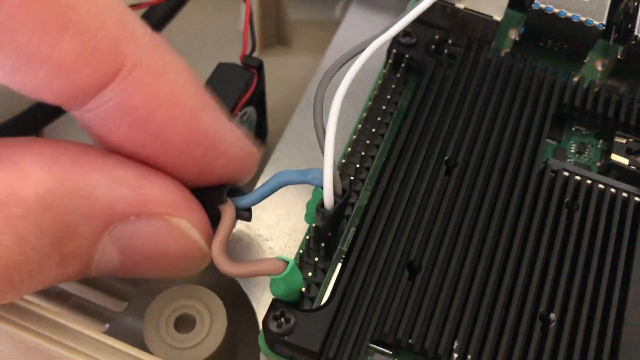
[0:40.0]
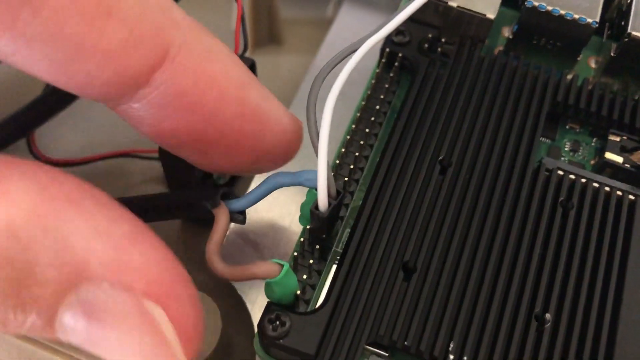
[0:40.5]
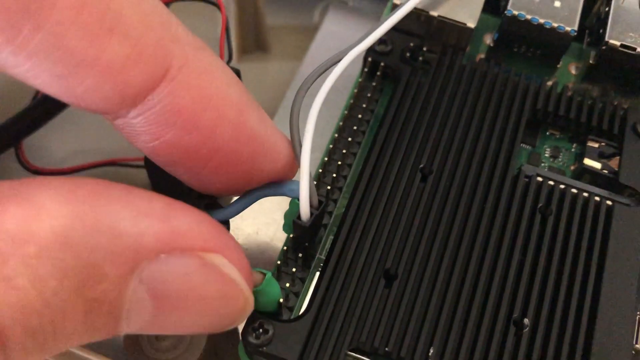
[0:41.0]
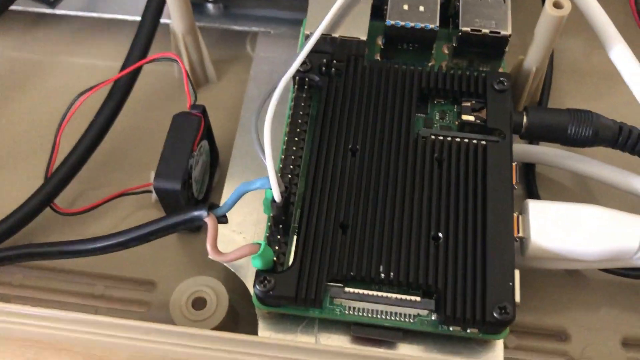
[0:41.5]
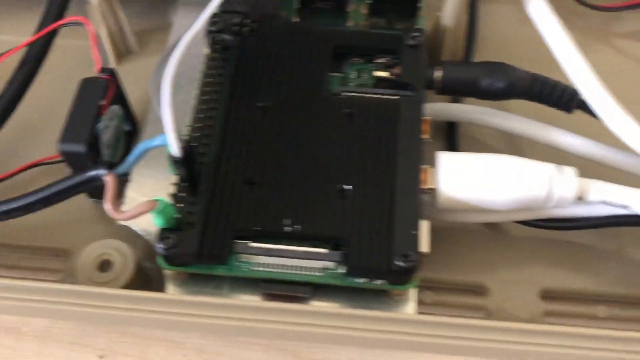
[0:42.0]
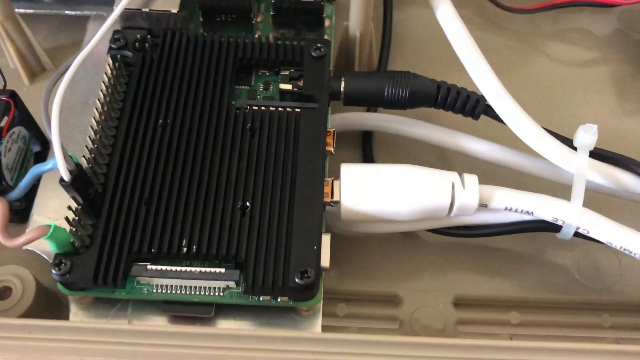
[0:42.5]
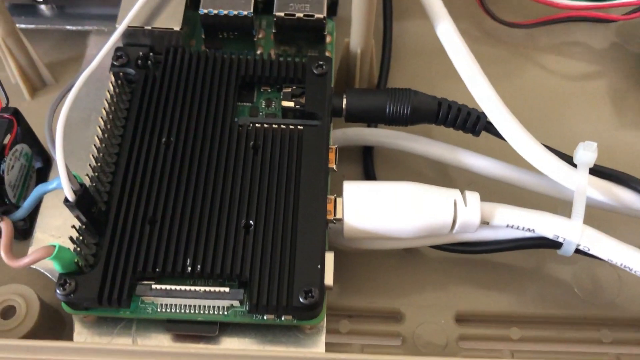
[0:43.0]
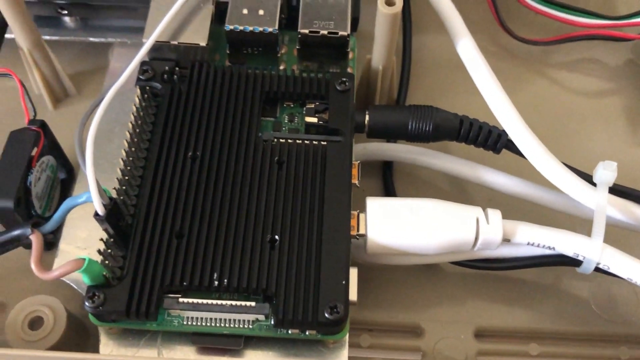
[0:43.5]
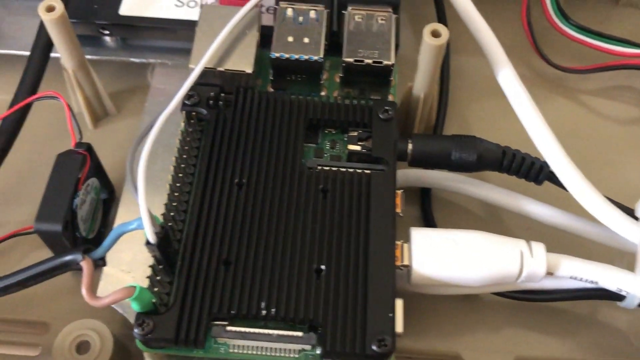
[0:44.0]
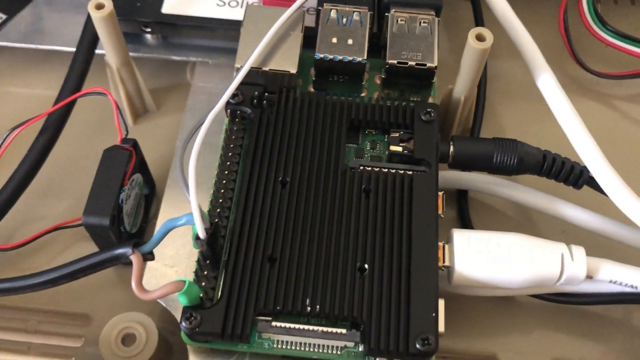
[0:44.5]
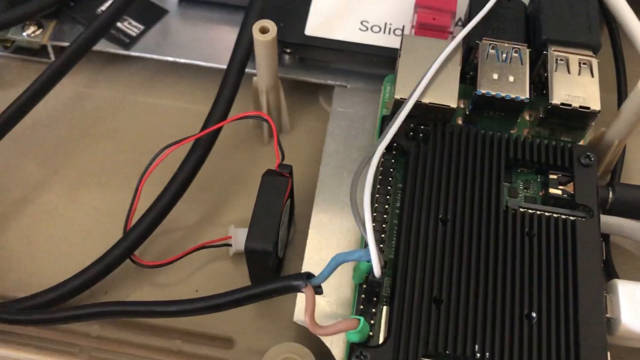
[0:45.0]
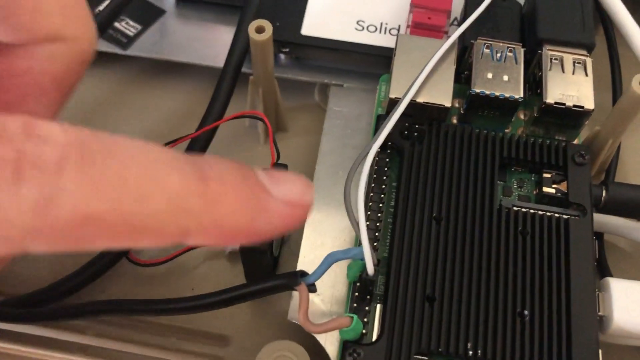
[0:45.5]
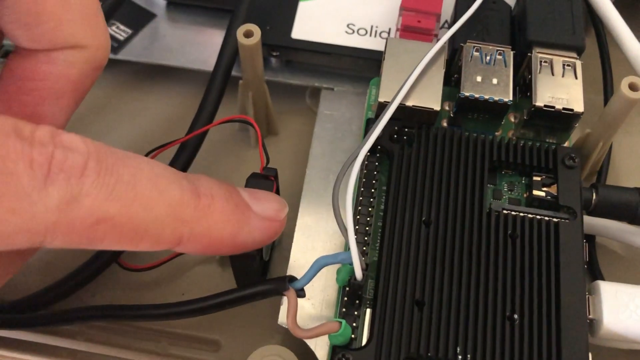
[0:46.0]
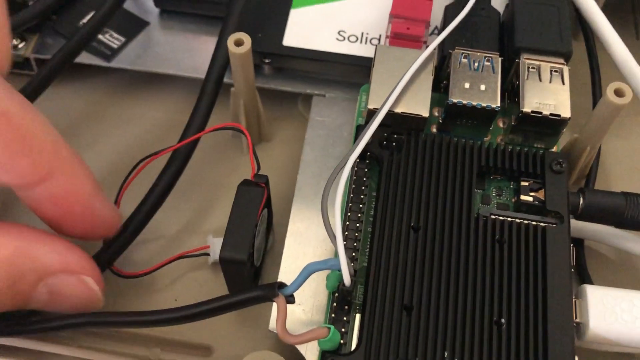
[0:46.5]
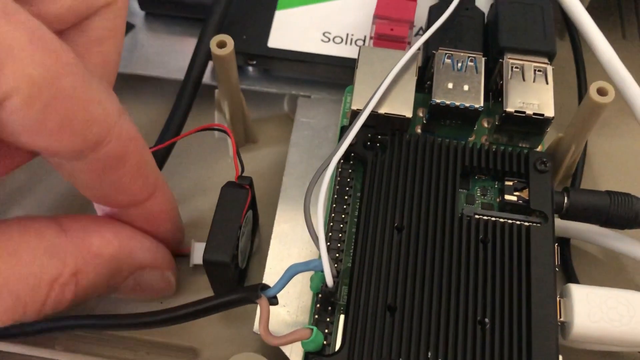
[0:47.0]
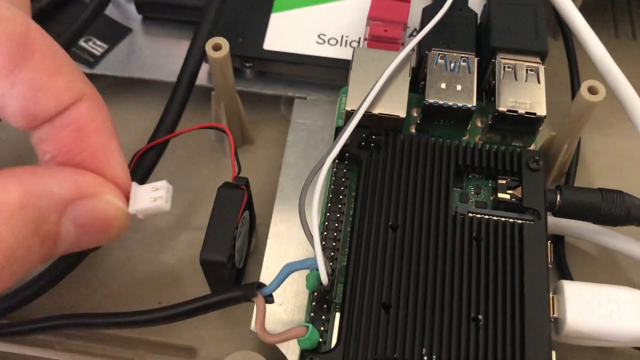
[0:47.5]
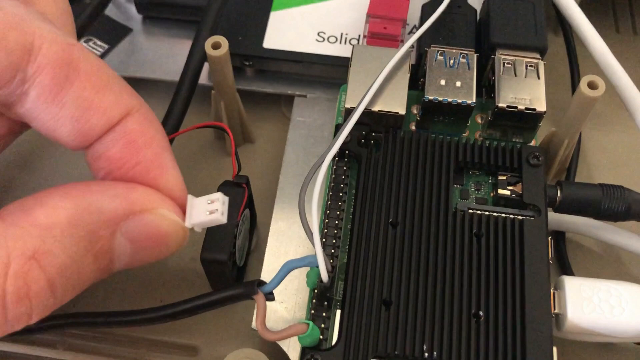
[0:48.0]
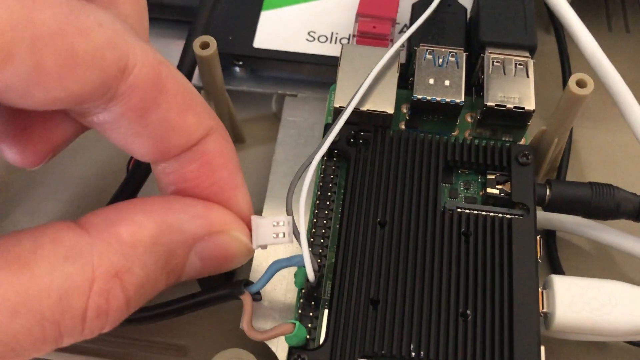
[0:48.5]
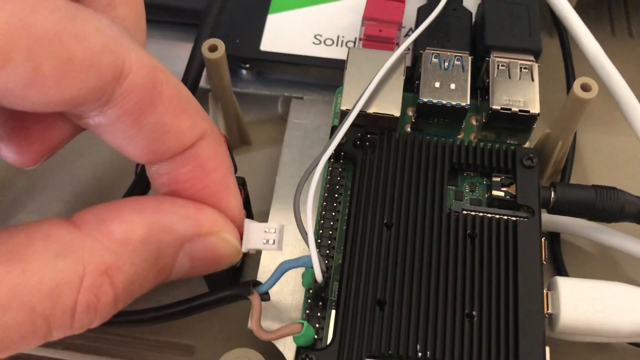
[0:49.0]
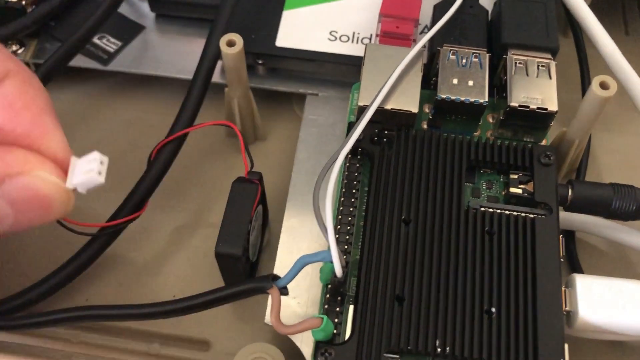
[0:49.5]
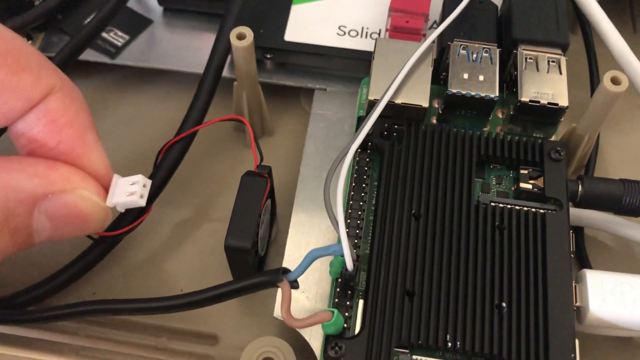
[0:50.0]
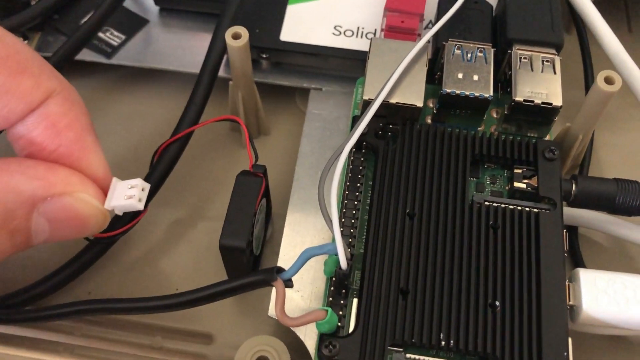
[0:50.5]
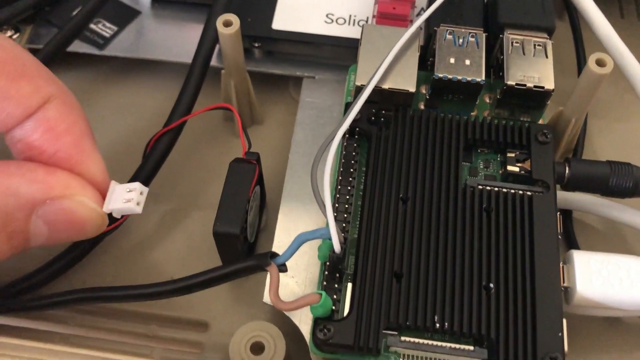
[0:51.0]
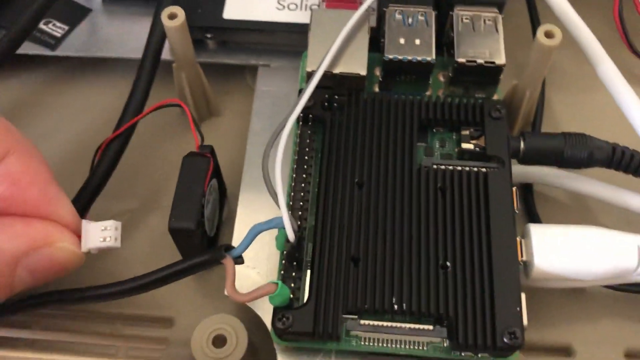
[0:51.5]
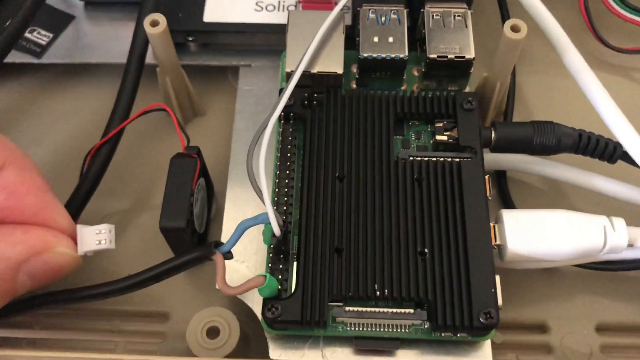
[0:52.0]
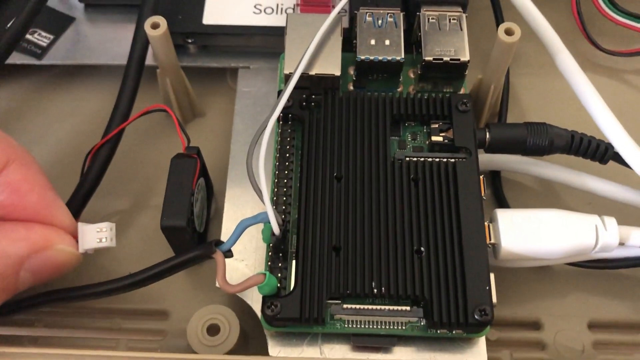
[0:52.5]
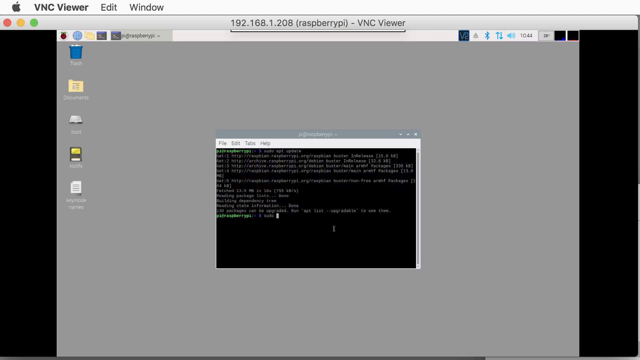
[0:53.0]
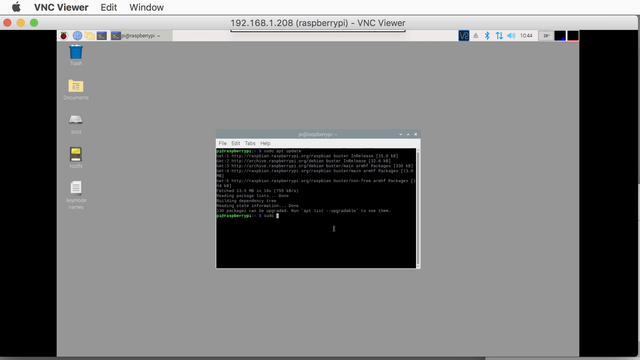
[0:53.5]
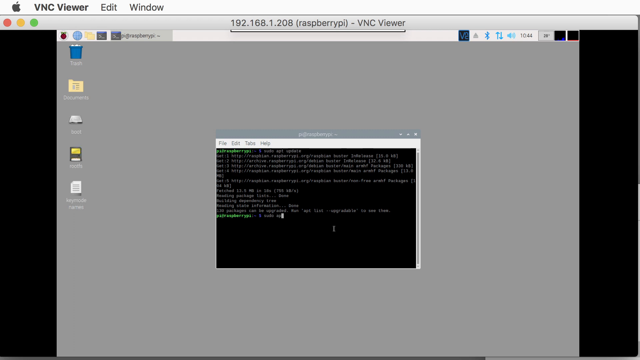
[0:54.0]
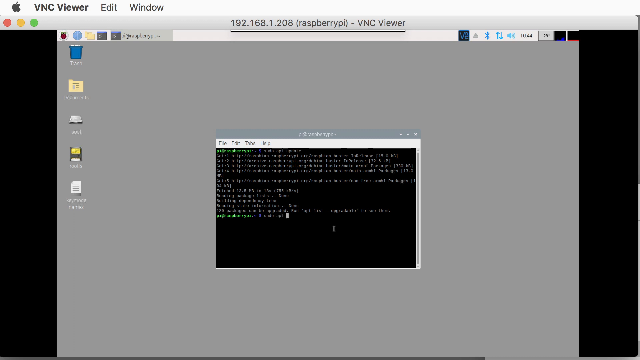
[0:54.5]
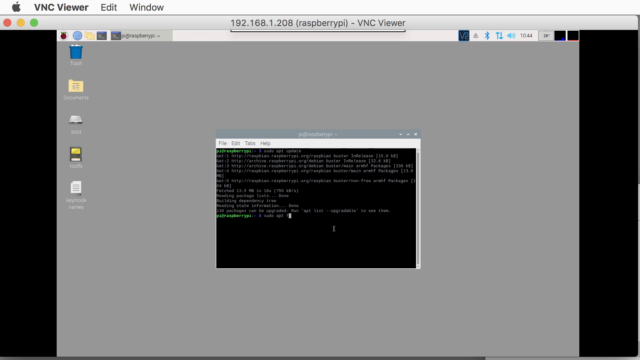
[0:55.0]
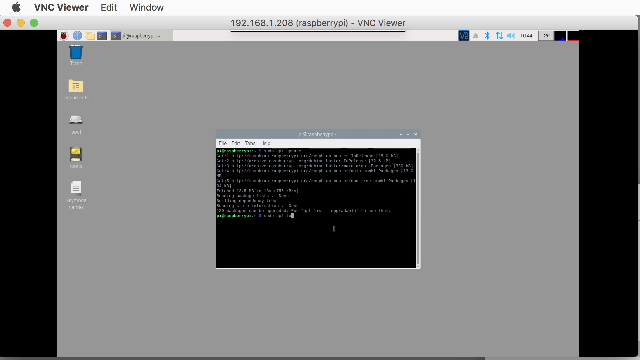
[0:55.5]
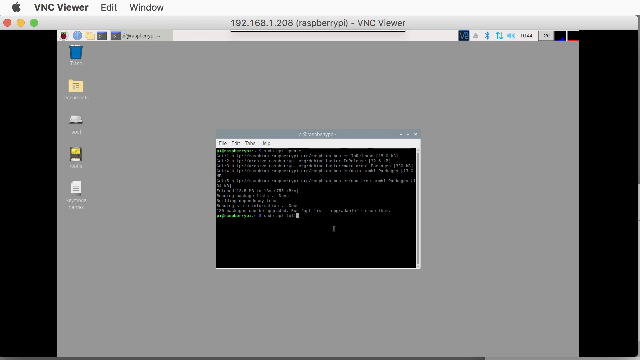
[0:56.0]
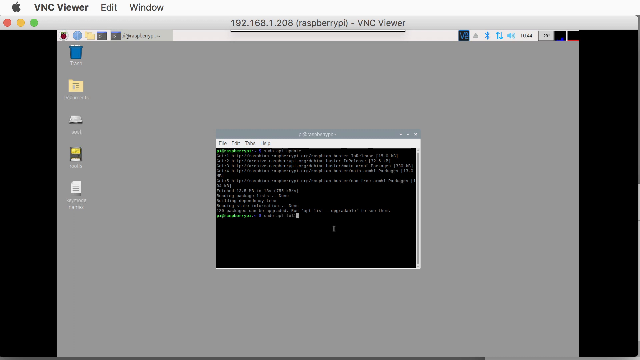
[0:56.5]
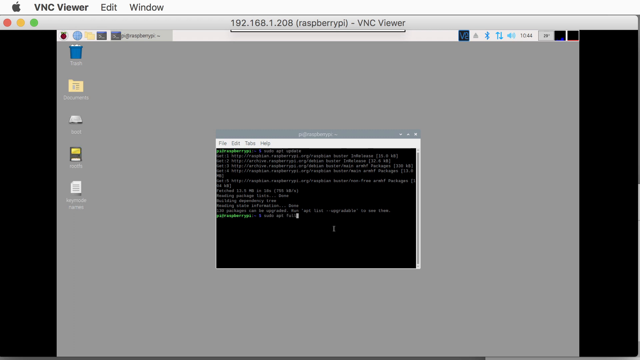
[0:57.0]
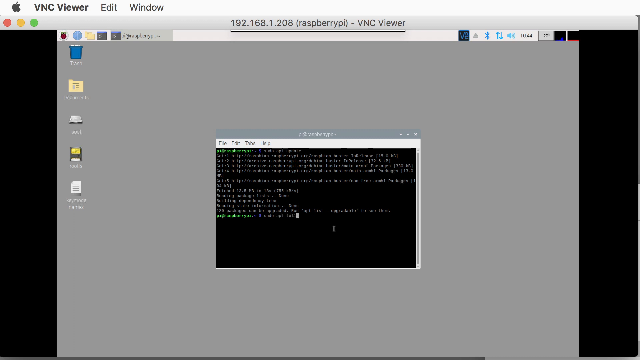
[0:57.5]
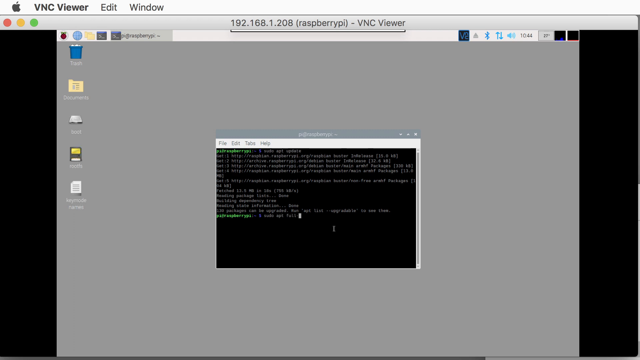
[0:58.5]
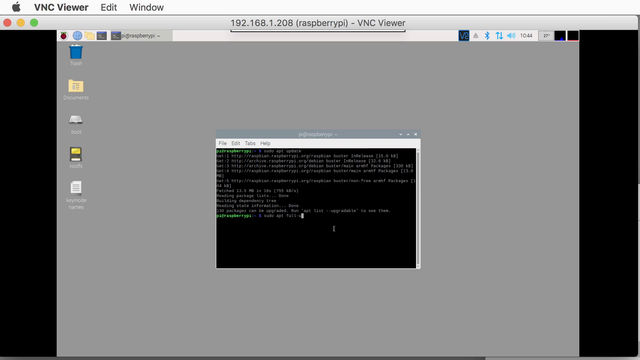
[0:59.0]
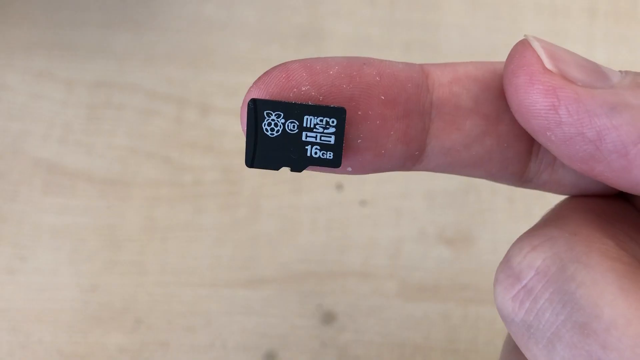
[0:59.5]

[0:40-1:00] The blue and pink wiring inserted into some sort of port is held up or pointed out. To the right of this device, three wires go into it: one is a power wire and another is perhaps a USB. A small fan is attached to the bottom of the keyboard device, with a piece of wiring attached to the fan; red and black wires are attached to a port that the person is holding. The video returns to the Mac screen, where the terminal window is open and someone is typing a command. Then an SD card flashes quickly on screen.